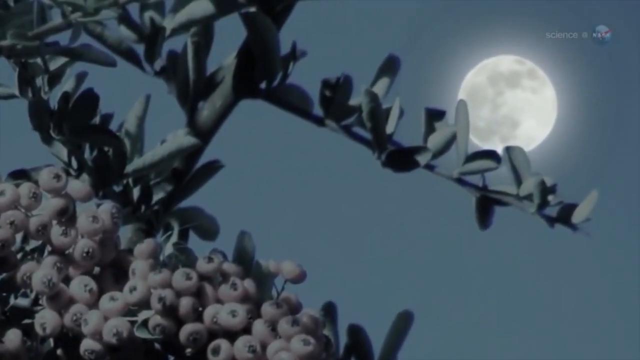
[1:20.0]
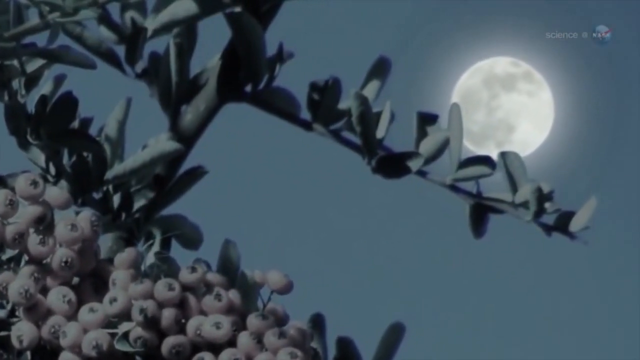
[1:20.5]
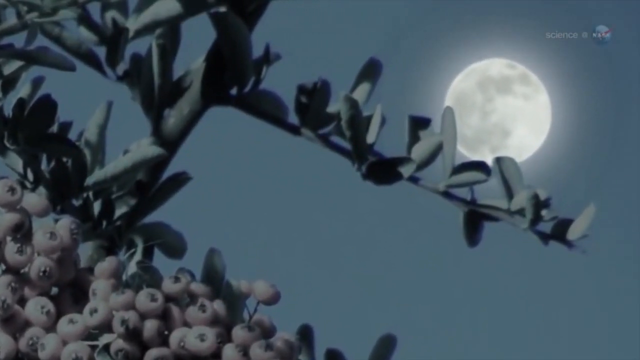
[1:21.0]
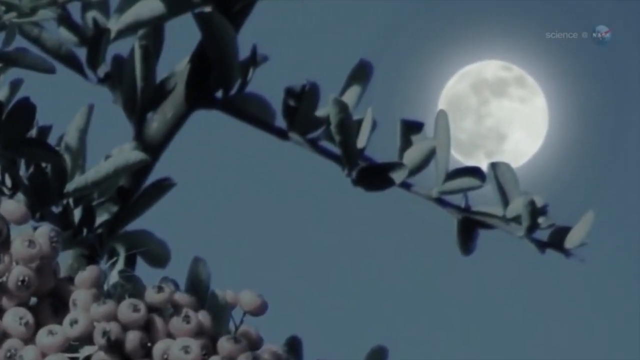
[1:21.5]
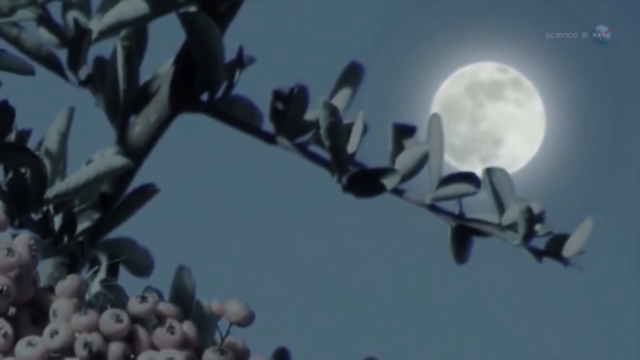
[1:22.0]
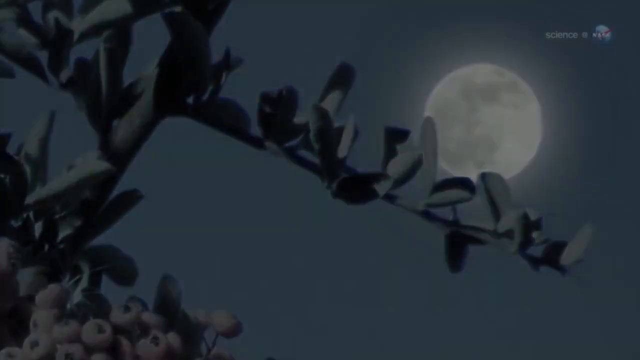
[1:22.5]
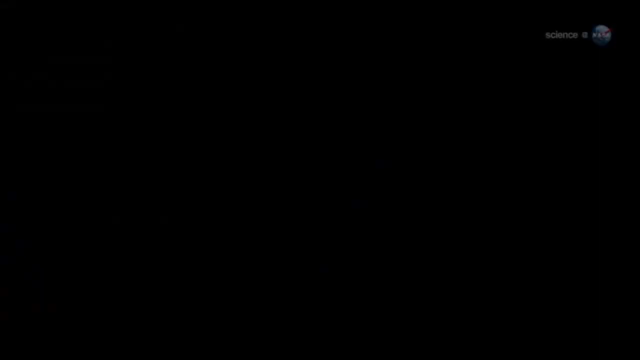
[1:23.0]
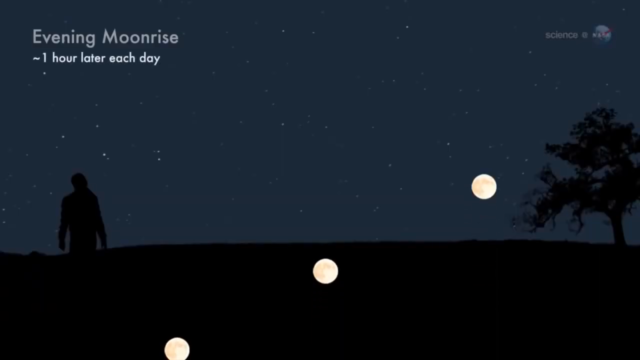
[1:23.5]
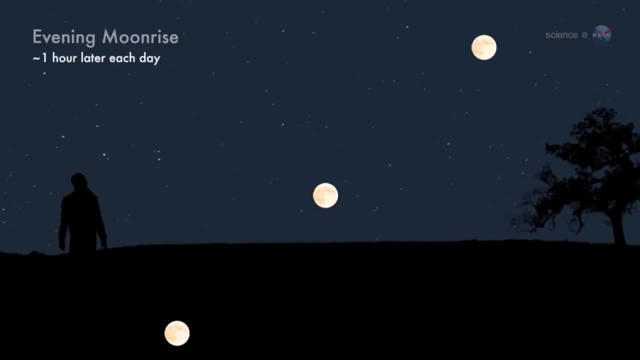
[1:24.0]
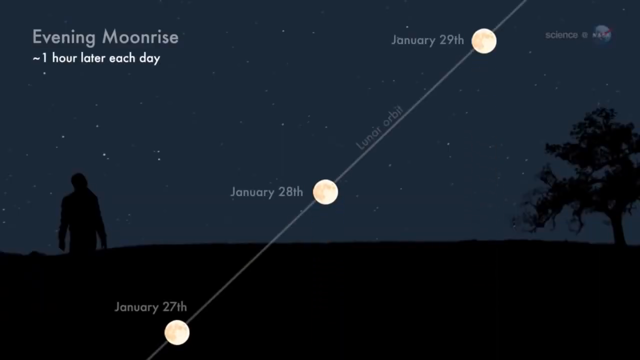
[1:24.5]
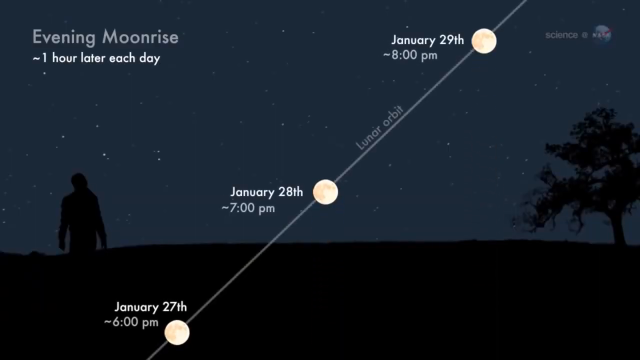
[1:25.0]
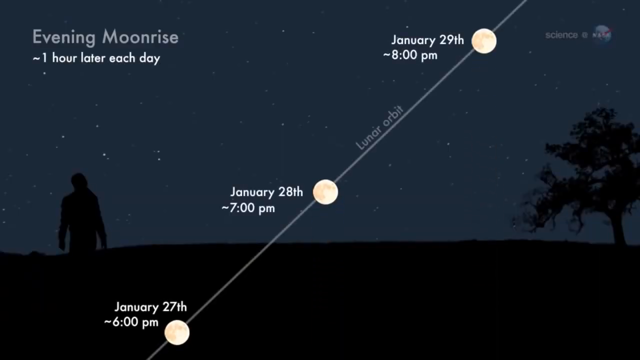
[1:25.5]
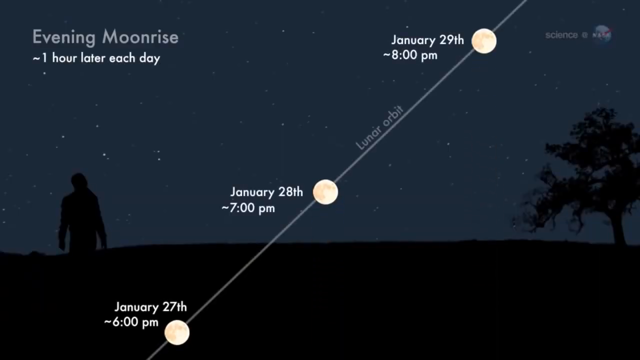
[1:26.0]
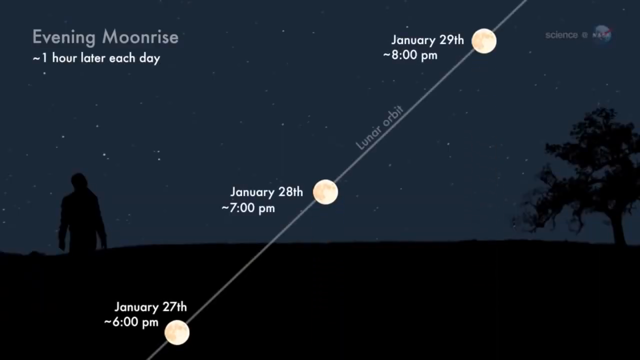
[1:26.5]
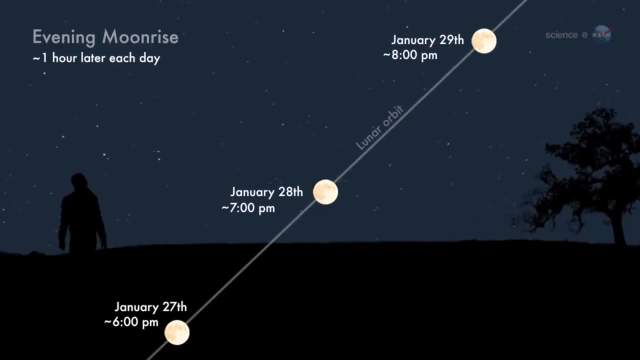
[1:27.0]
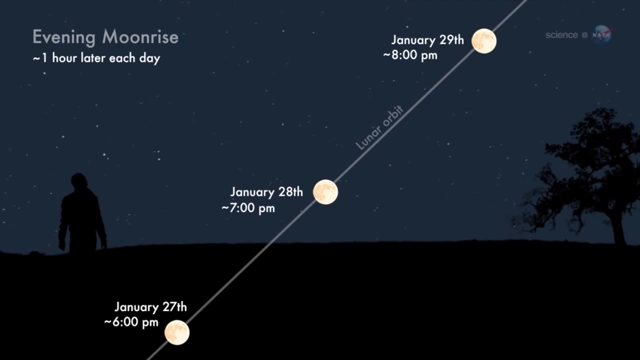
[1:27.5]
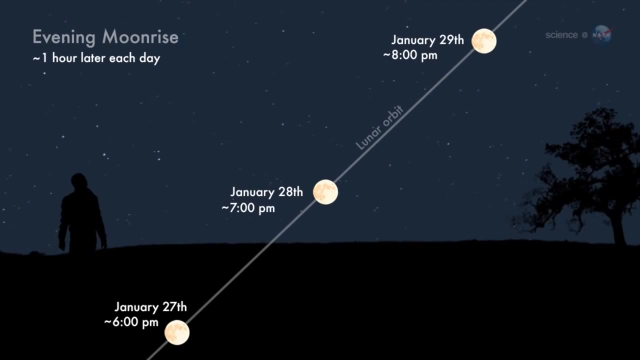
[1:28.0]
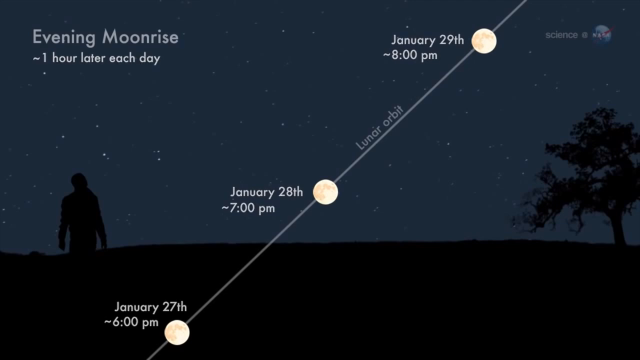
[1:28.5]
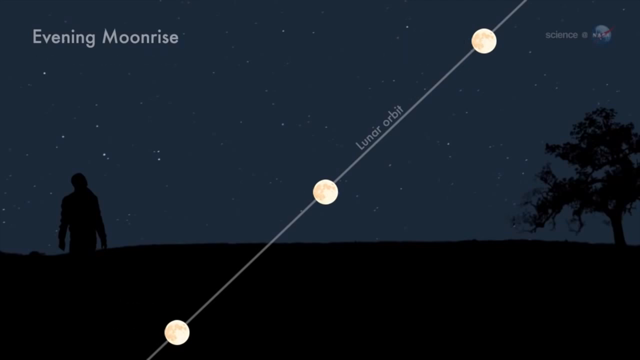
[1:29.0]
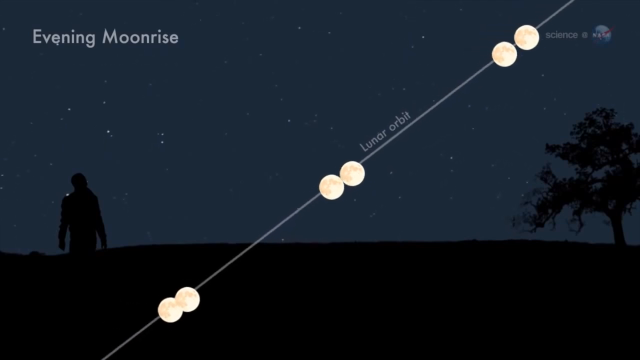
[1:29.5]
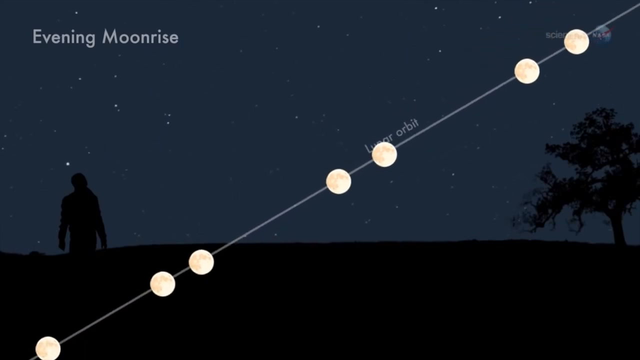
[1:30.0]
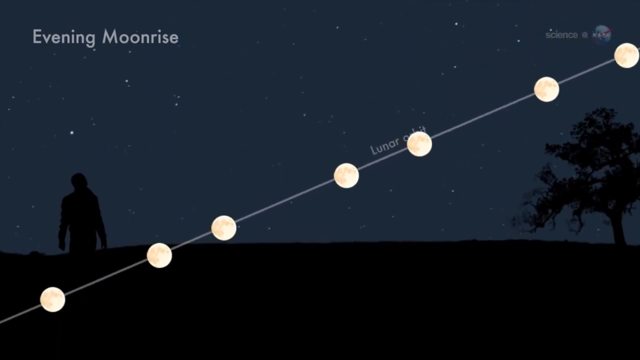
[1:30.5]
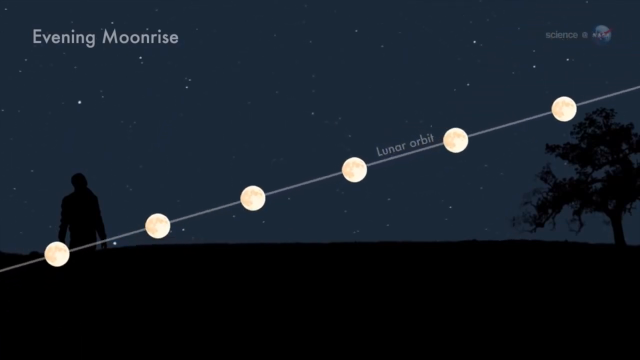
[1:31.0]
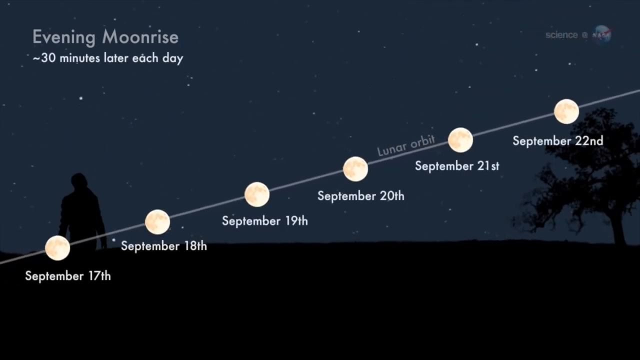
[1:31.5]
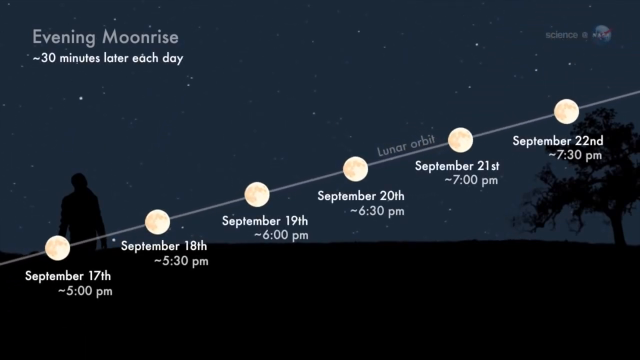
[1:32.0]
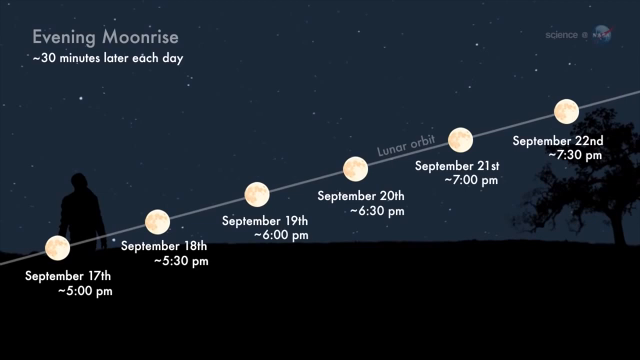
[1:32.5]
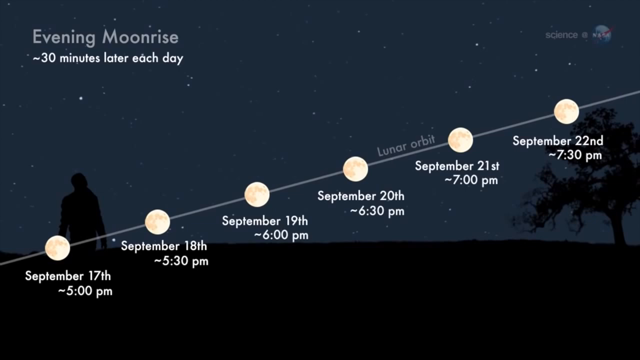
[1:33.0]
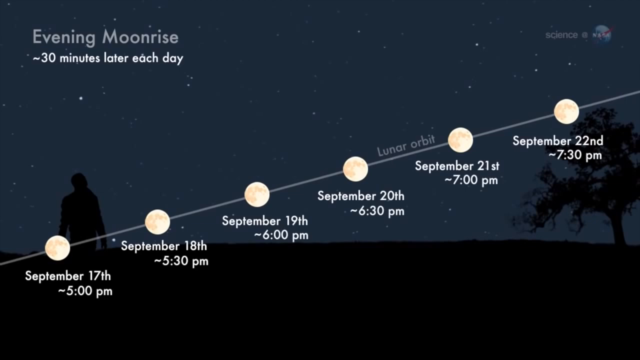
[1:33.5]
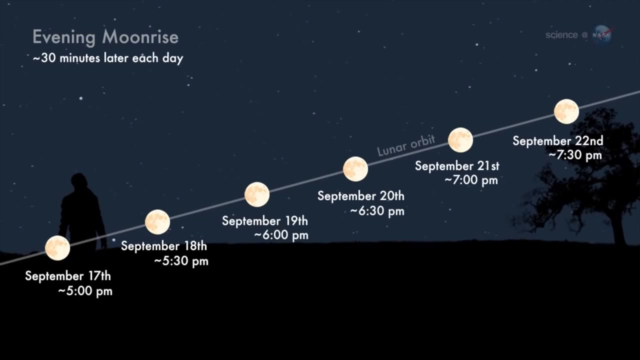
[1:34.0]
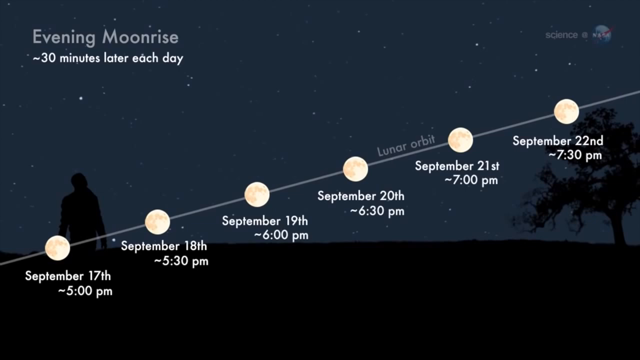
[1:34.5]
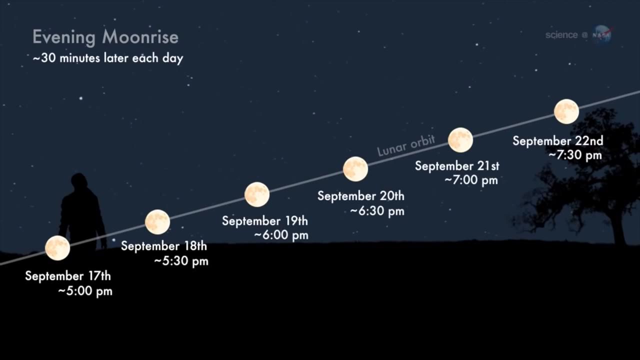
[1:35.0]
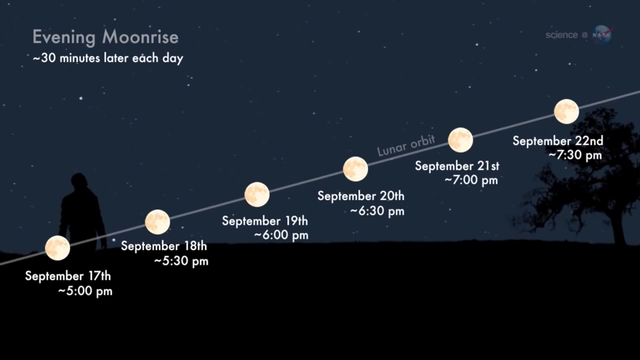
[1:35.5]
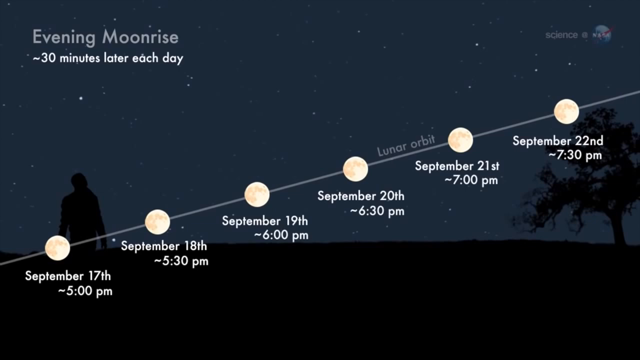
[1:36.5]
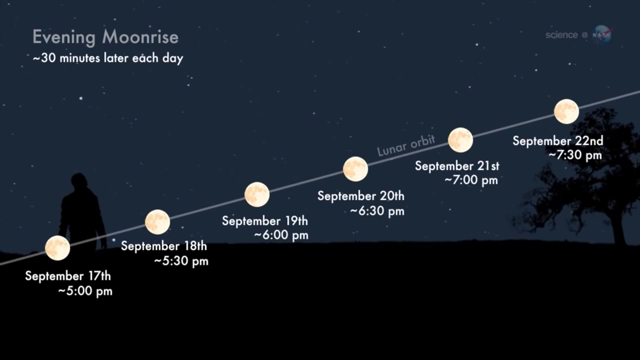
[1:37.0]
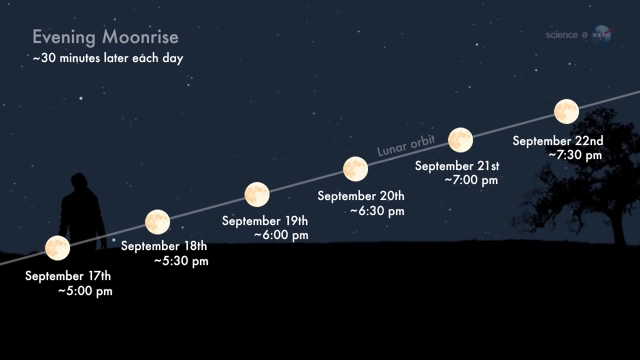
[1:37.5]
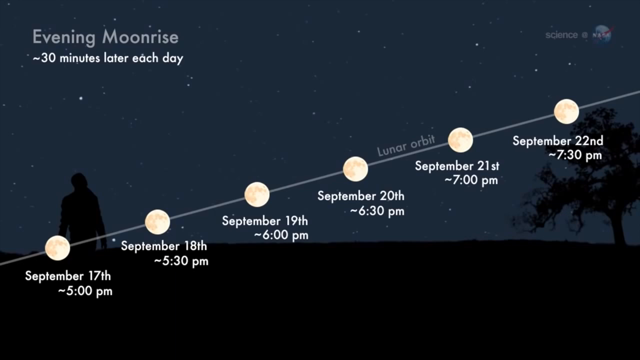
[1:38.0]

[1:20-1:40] The branches with grapes are still shown as the view zooms in on the moon. The scene then shows the evening moonrise. In the background, the silhouette of a man is in the bottom left corner and the silhouette of a tree is on the right; the man looks like he is staring up at a night sky filled with stars. A diagonal line appears from left to right, showing six different phases of the moon in a lunar orbit, labeled from left to right "September 17th, 5pm," "September 18th, 5:30pm," "September 19th, 6pm," "September 20th, 6:30pm," "September 21st, 7pm," and "September 22nd, 7:30pm," apparently illustrating the moon rising thirty minutes later each day at this time of year. The view lingers on this for a little while.